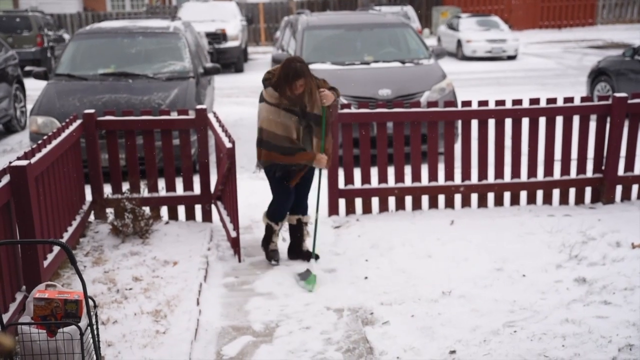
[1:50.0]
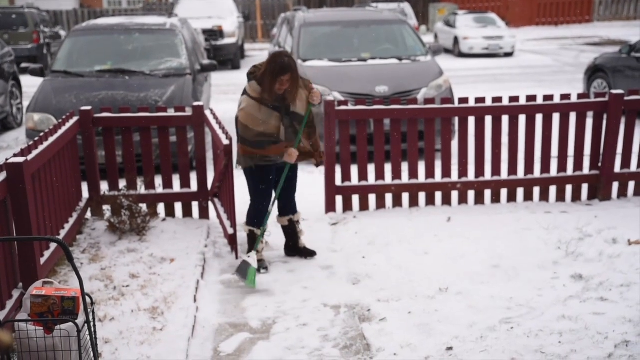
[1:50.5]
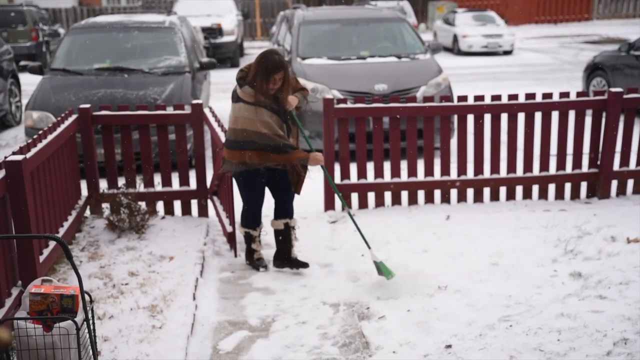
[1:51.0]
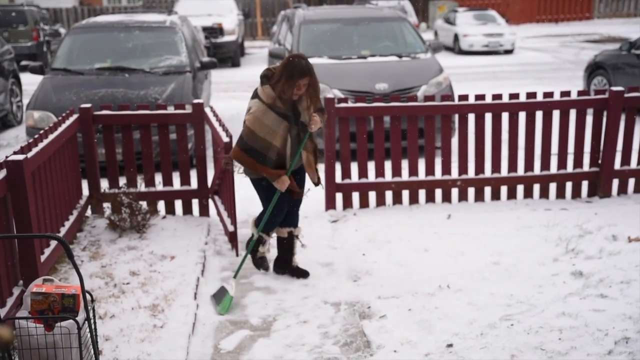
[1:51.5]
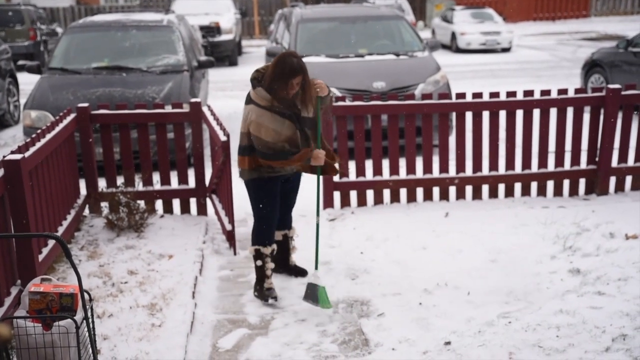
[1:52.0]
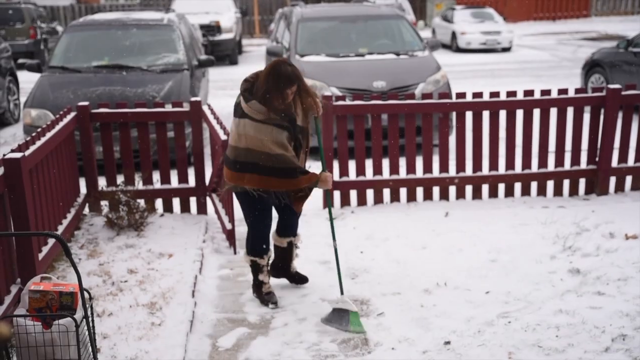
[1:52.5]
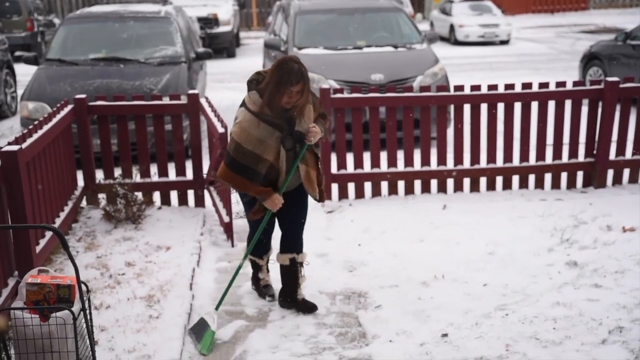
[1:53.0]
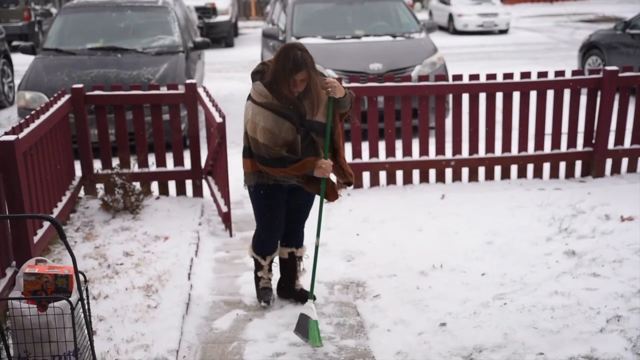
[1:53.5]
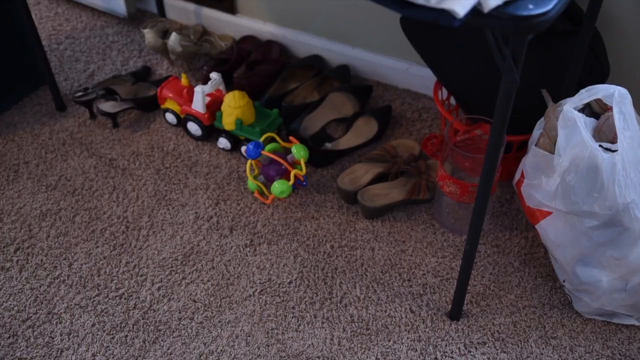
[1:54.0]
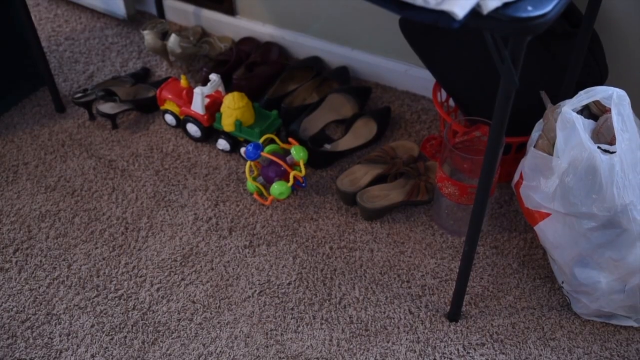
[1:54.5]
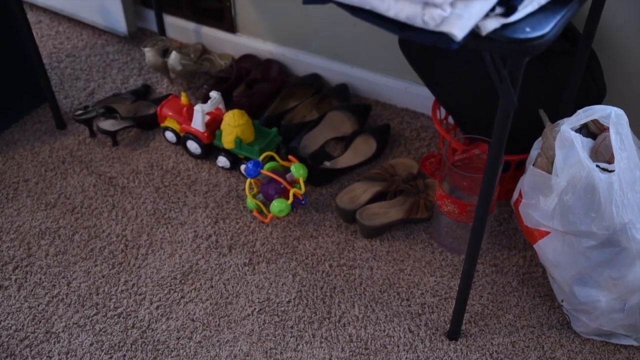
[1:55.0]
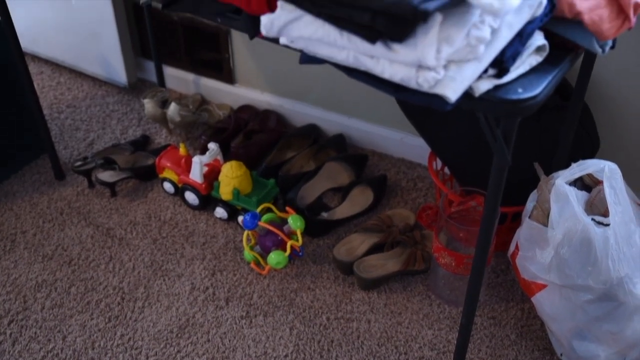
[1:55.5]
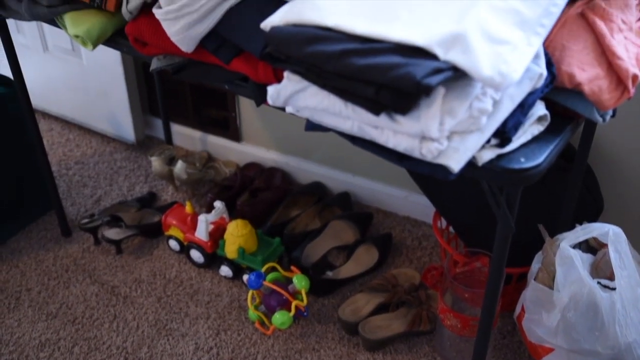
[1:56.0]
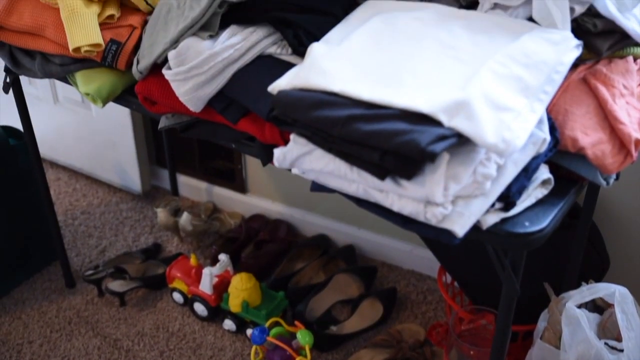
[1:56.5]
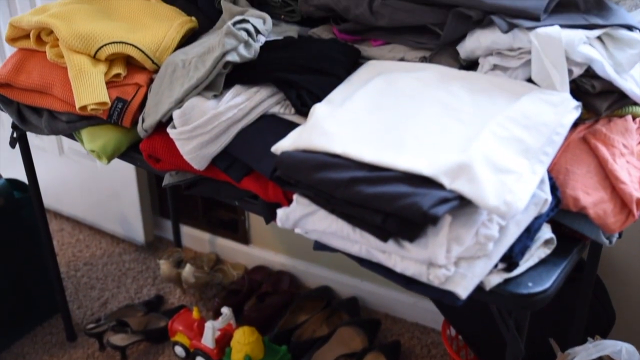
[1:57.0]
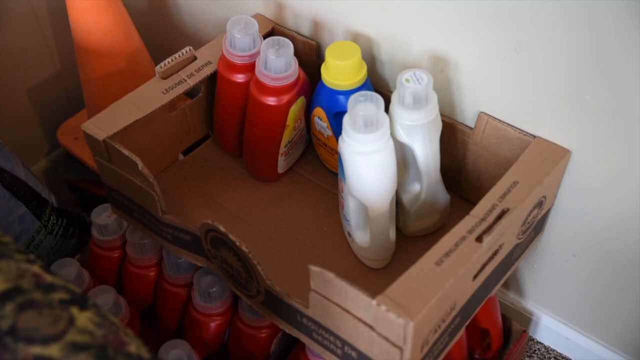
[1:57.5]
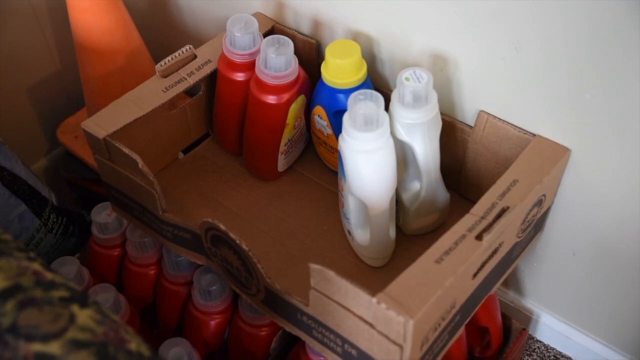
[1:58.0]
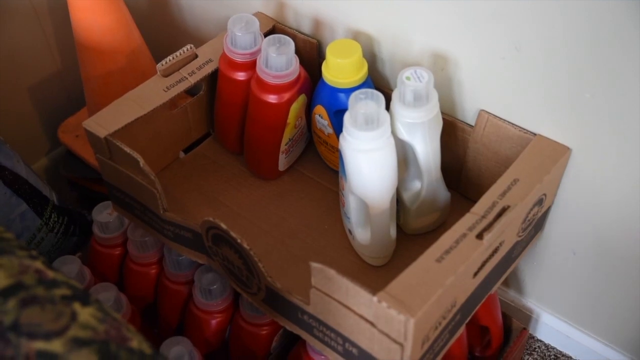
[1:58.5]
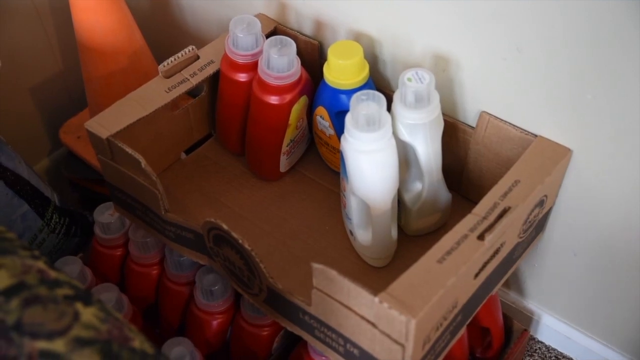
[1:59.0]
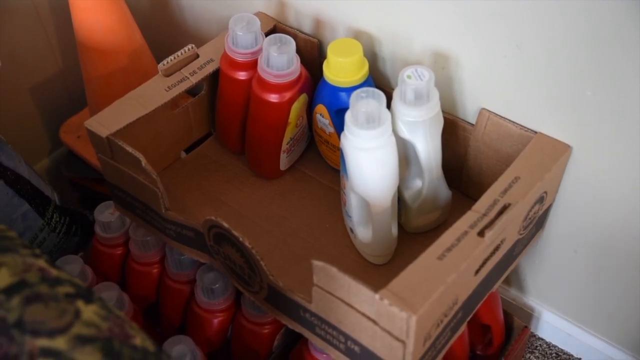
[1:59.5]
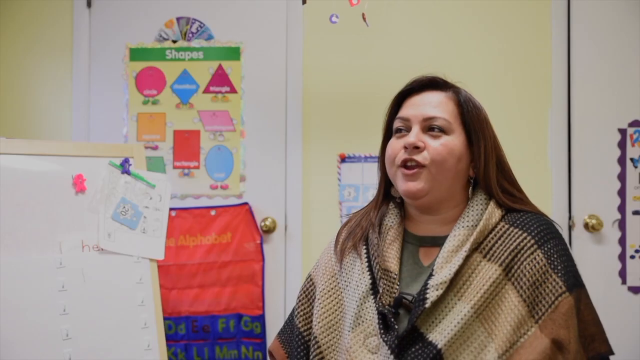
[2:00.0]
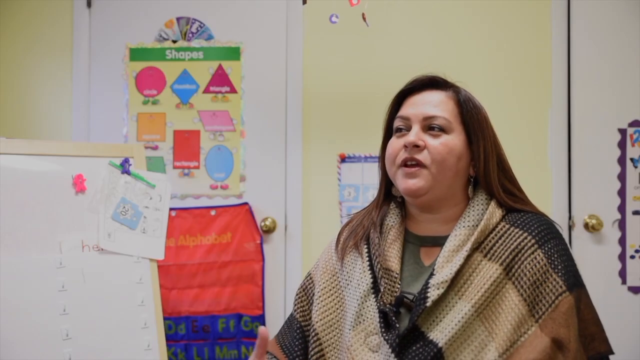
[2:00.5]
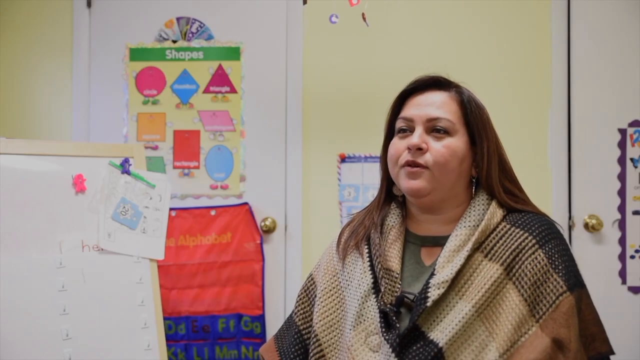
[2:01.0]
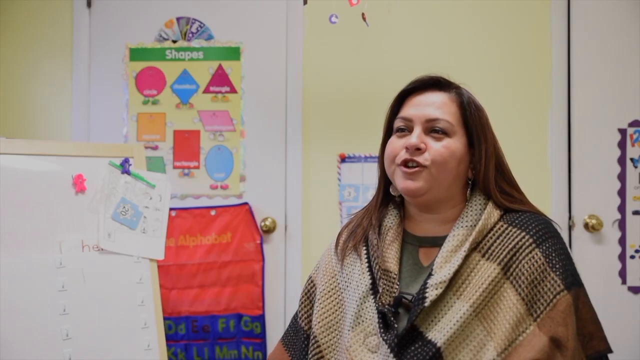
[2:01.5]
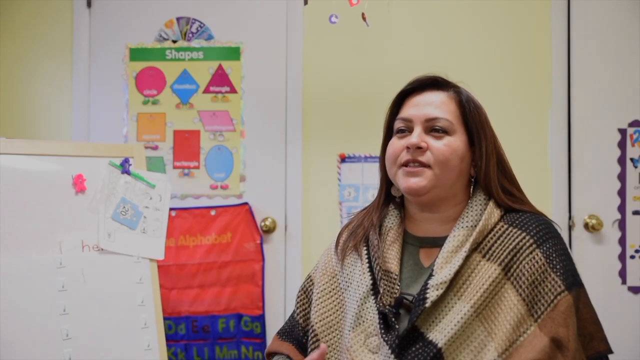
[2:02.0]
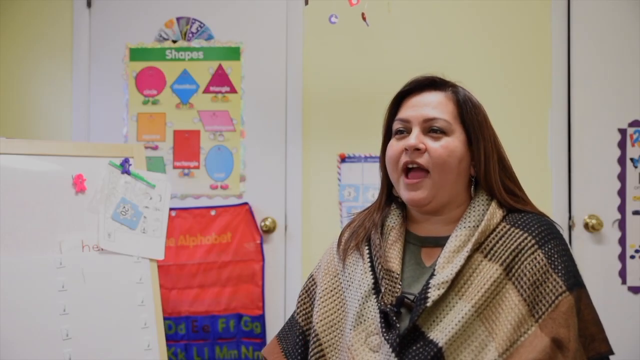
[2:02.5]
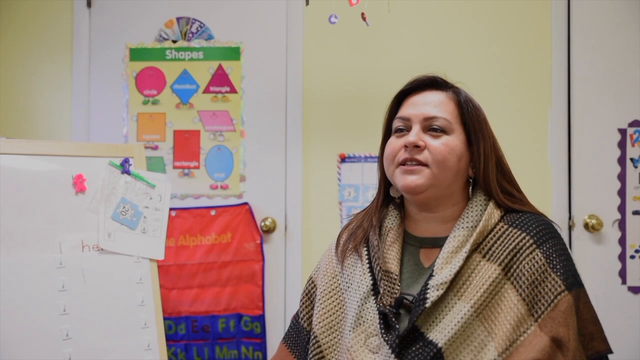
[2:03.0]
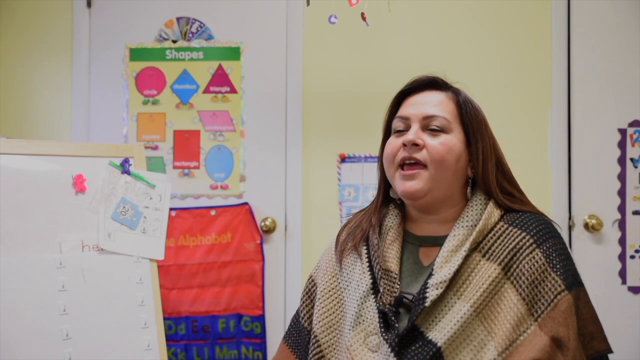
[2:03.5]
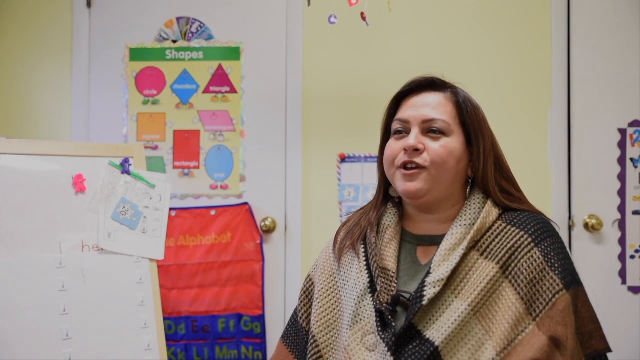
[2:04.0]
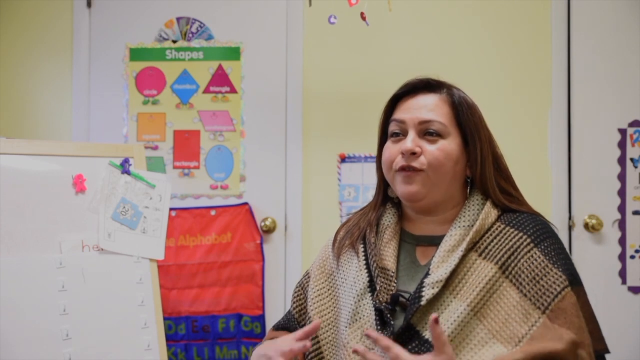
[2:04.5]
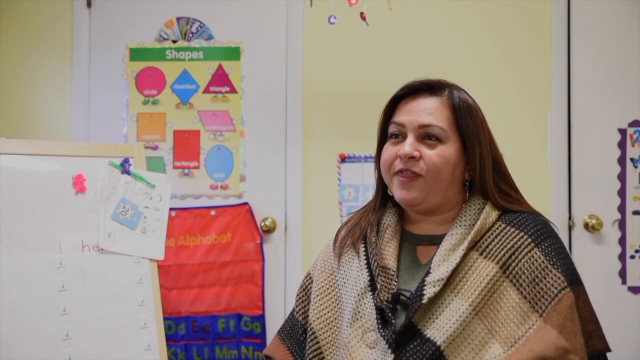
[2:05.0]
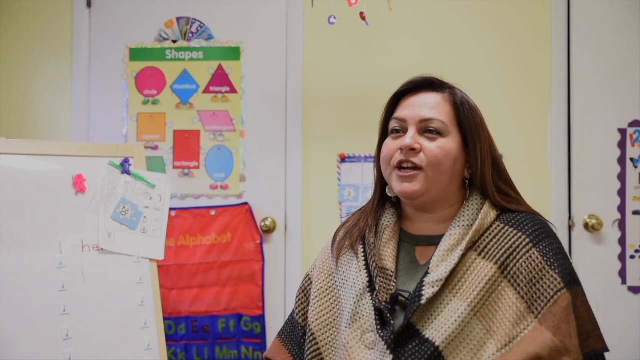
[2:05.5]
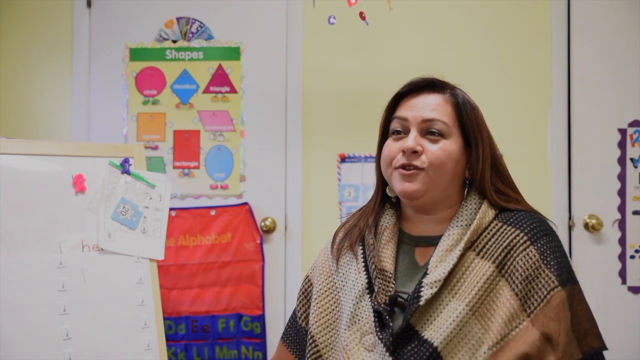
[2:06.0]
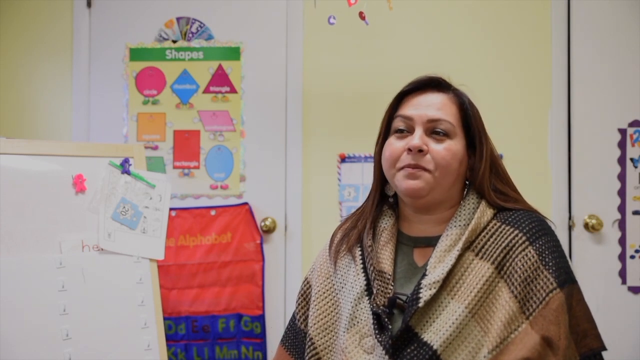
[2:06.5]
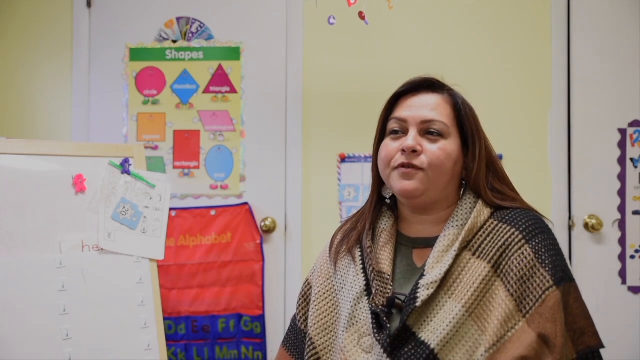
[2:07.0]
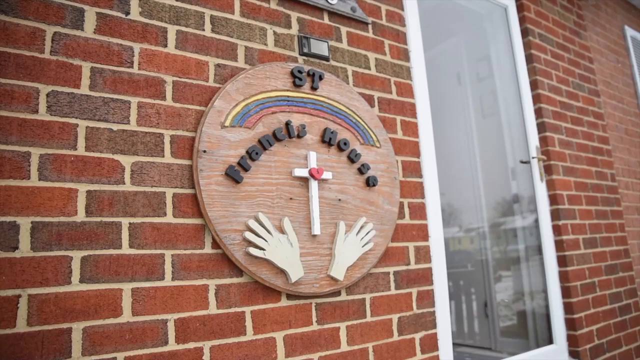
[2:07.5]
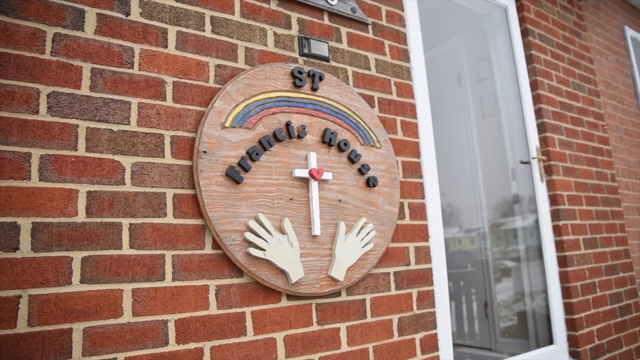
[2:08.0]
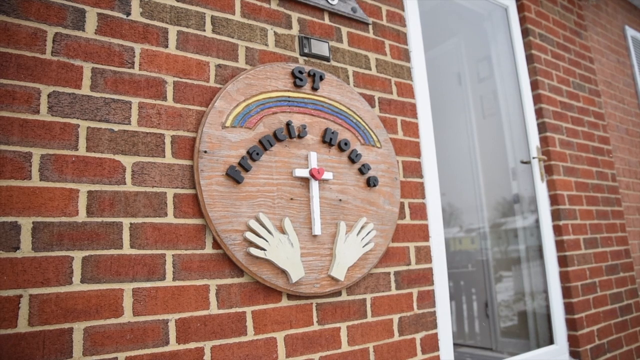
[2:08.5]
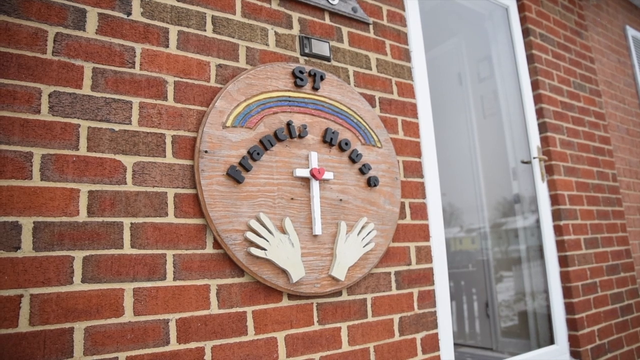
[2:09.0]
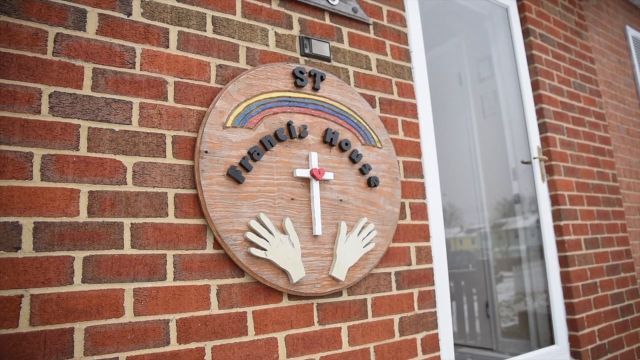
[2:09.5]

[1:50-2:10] Doris is at home, trying to clear the snow in front of her house with a mop. There is a wooden barricade painted red, and many cars are parked in front of the house, some black and some white, covered by snow. She apparently cannot enter her house because of the snow. Inside her house there are a lot of household things, including shoes, and the setting of her room is visible. The woman who works in the house is also seen speaking to the camera.